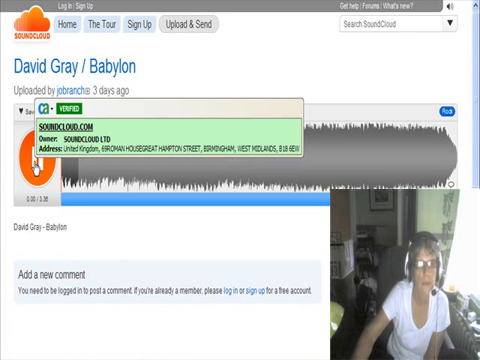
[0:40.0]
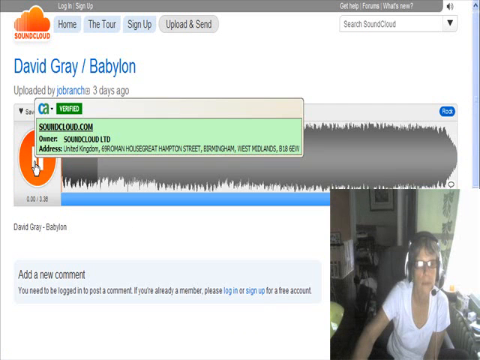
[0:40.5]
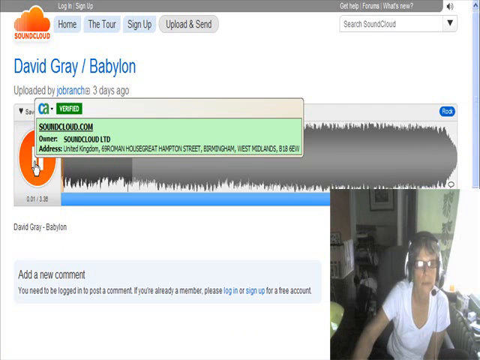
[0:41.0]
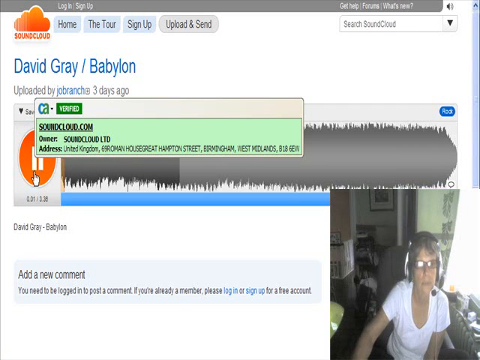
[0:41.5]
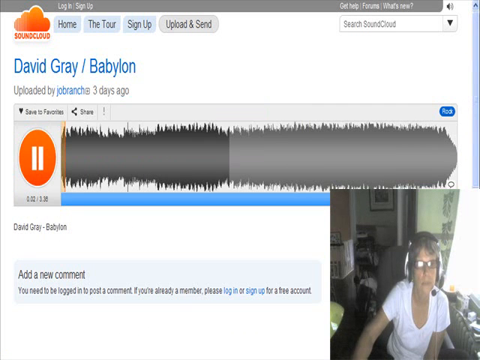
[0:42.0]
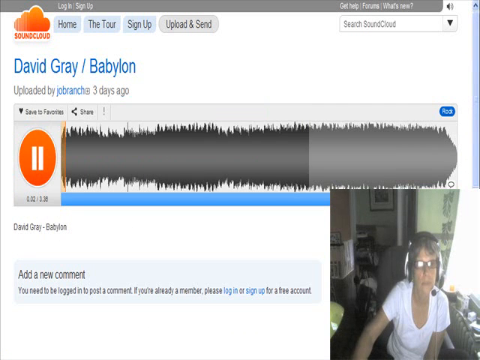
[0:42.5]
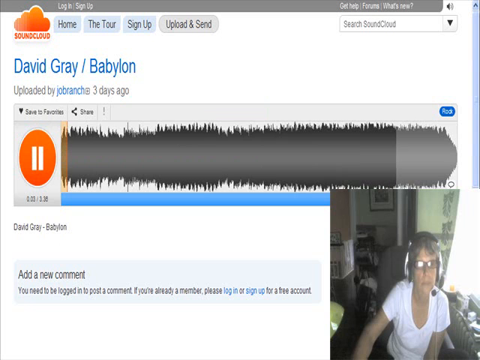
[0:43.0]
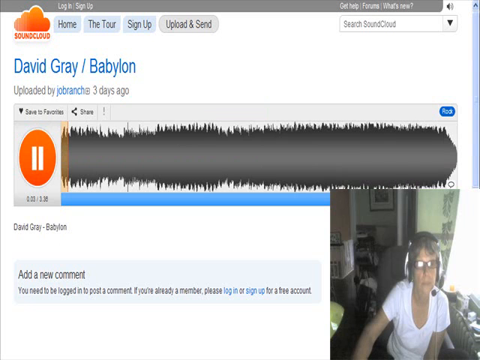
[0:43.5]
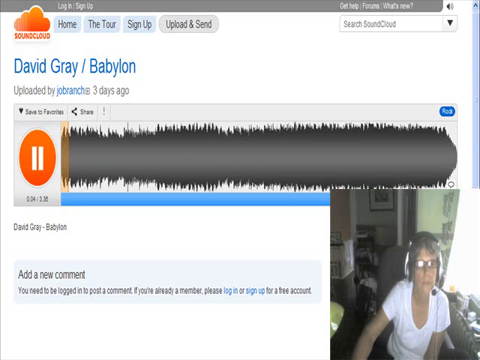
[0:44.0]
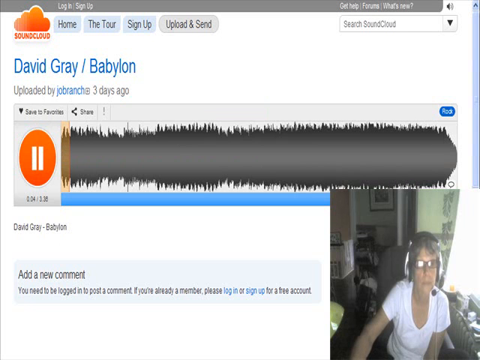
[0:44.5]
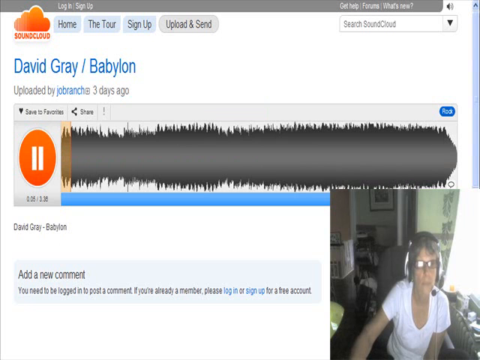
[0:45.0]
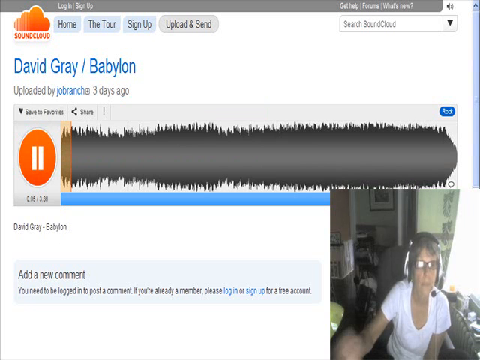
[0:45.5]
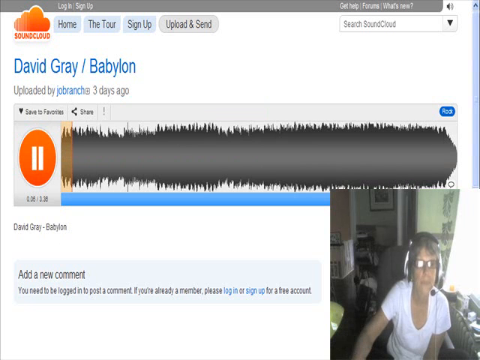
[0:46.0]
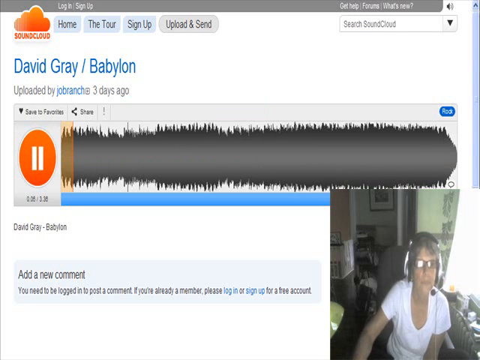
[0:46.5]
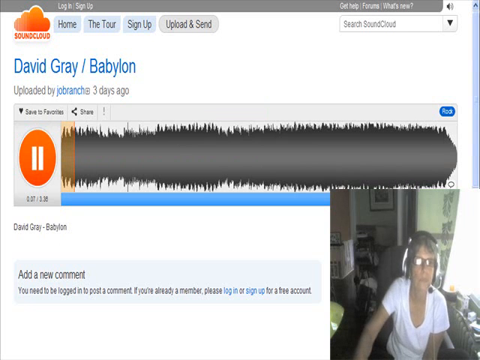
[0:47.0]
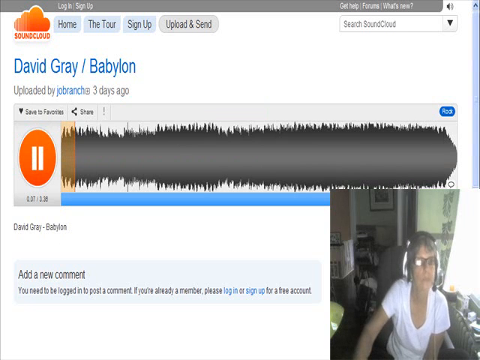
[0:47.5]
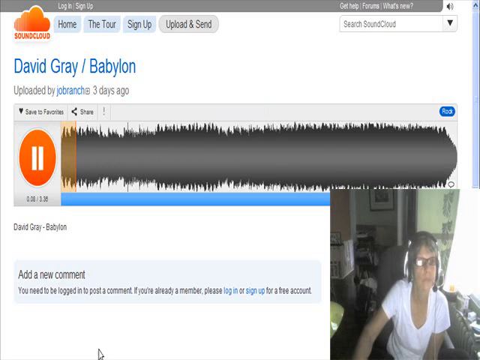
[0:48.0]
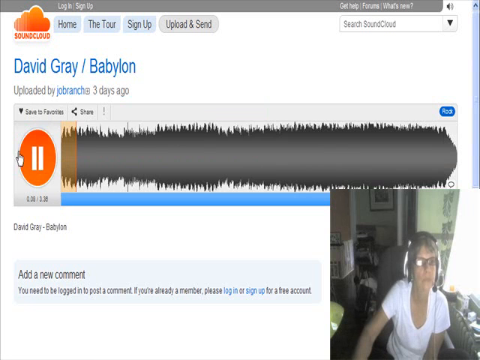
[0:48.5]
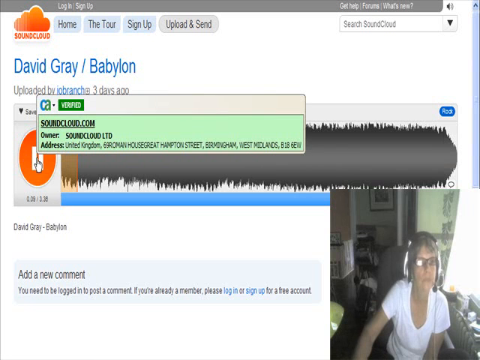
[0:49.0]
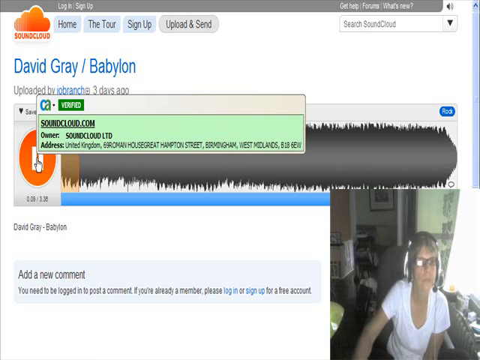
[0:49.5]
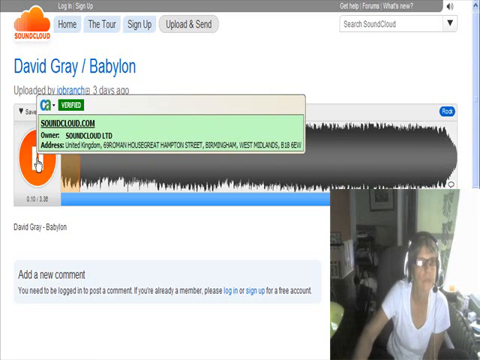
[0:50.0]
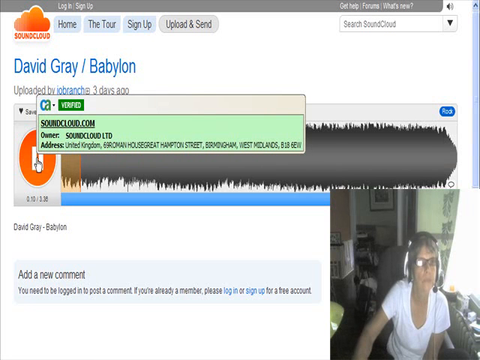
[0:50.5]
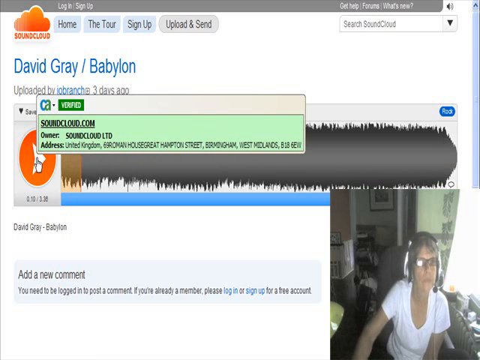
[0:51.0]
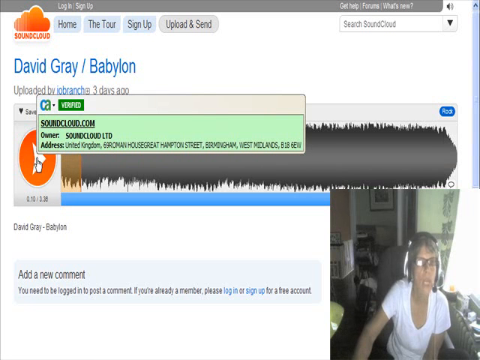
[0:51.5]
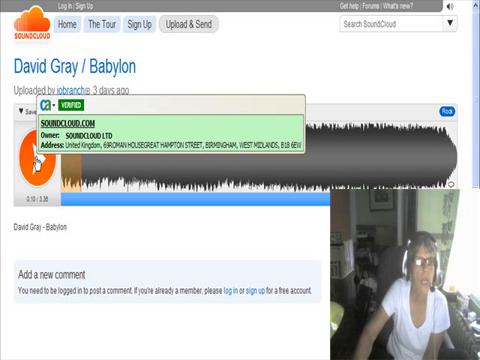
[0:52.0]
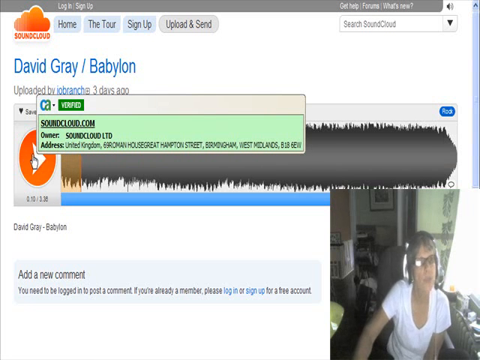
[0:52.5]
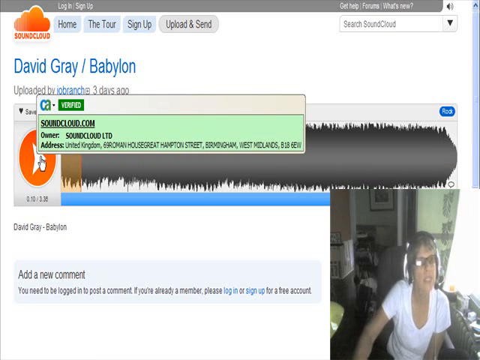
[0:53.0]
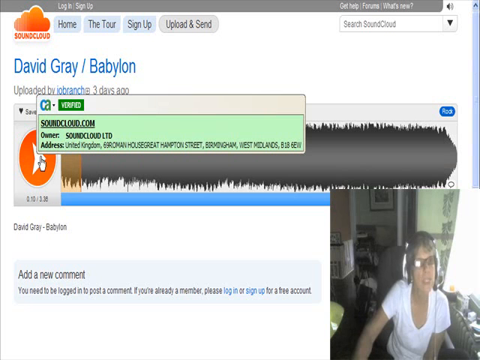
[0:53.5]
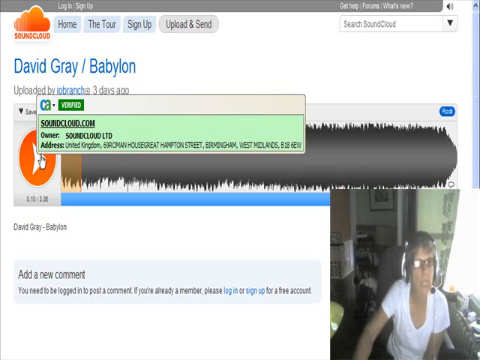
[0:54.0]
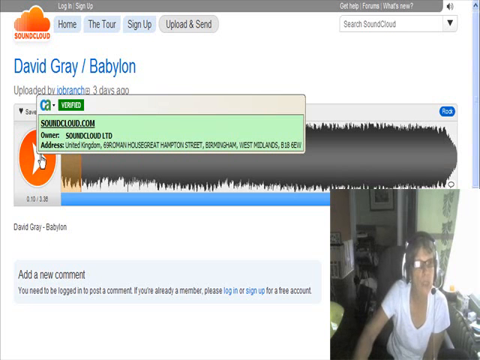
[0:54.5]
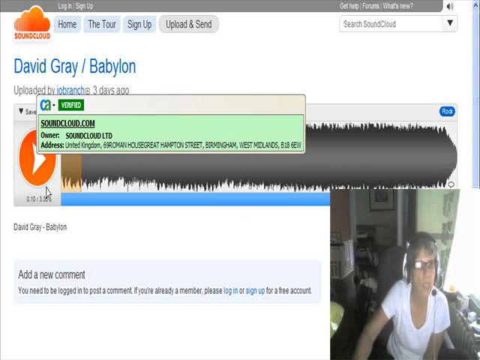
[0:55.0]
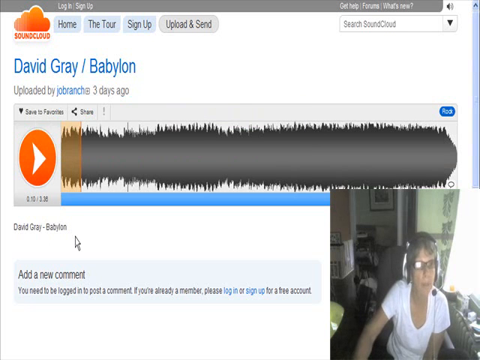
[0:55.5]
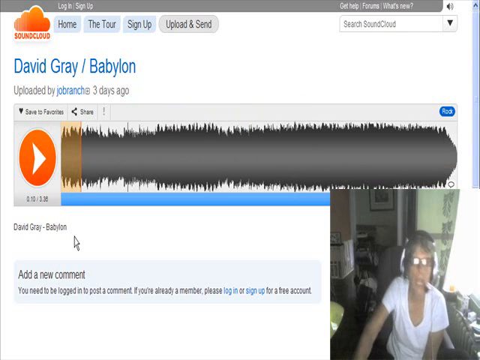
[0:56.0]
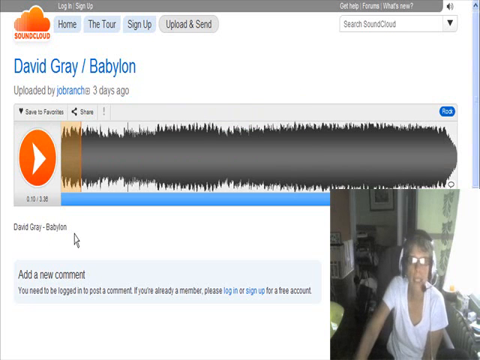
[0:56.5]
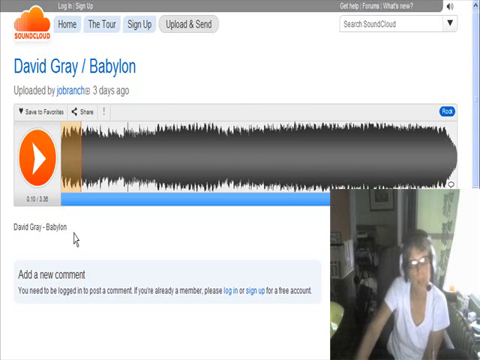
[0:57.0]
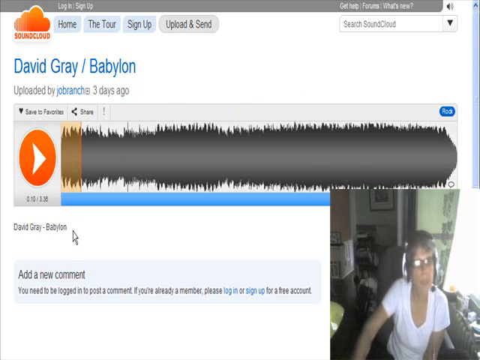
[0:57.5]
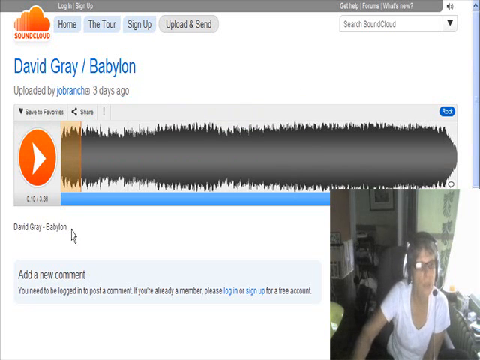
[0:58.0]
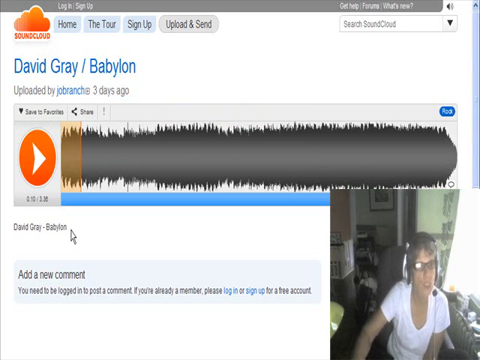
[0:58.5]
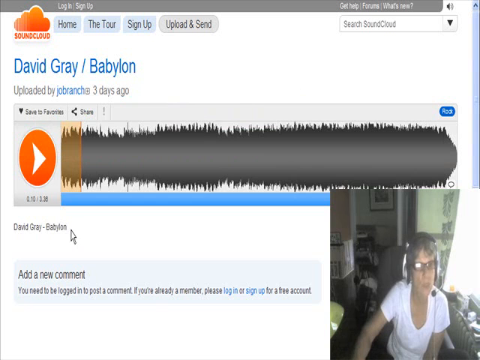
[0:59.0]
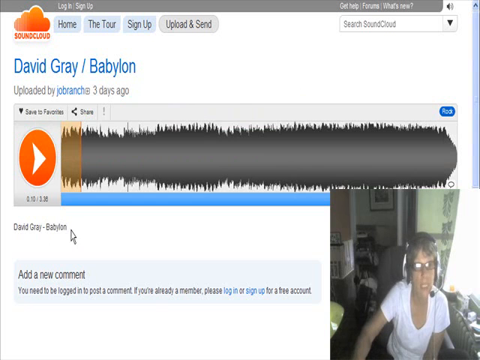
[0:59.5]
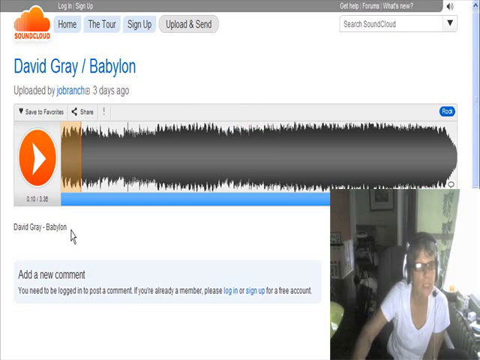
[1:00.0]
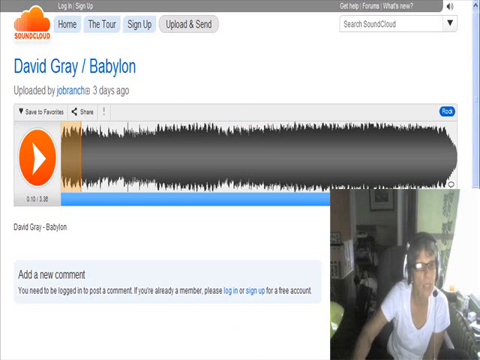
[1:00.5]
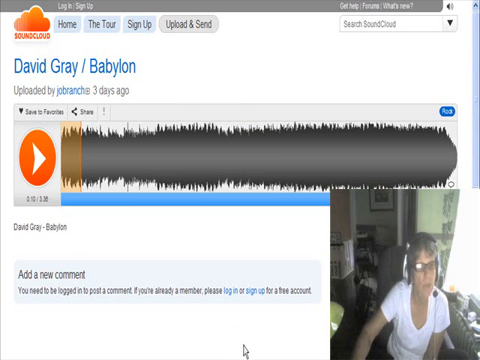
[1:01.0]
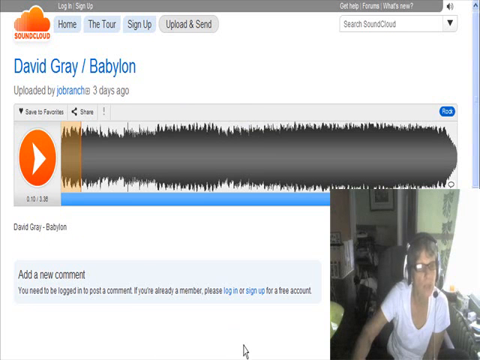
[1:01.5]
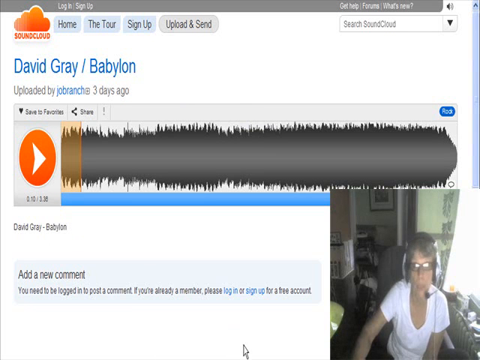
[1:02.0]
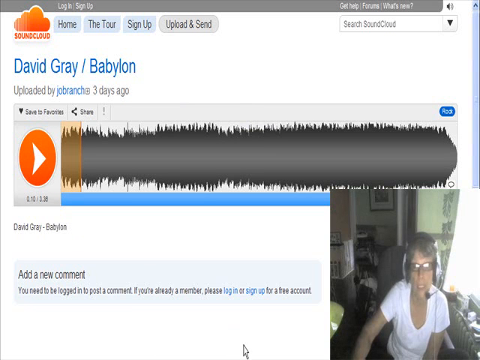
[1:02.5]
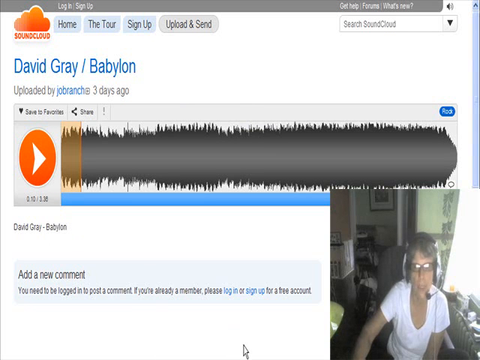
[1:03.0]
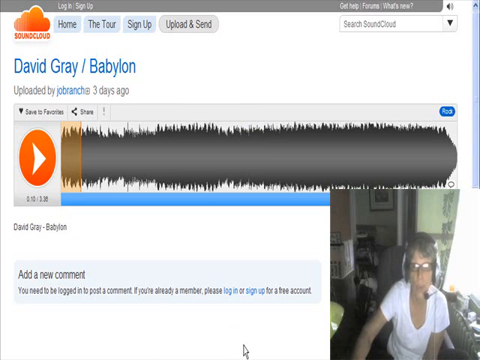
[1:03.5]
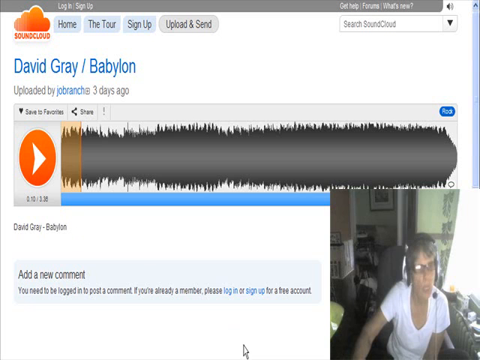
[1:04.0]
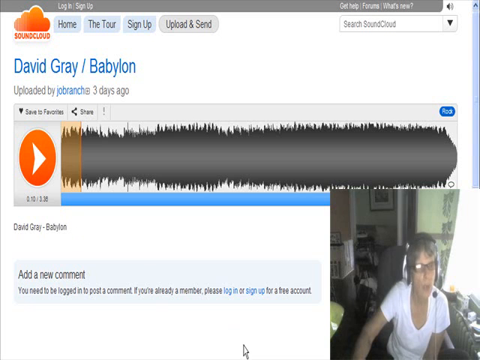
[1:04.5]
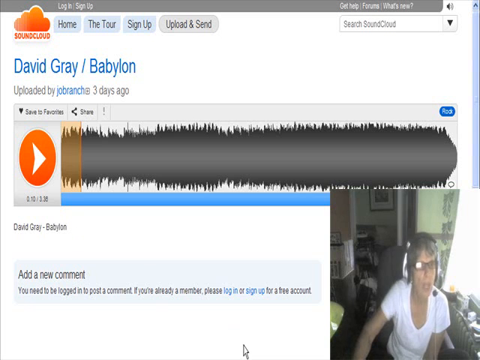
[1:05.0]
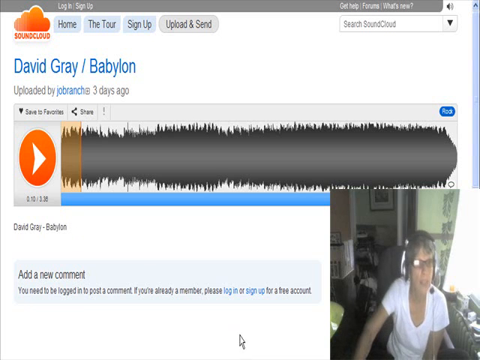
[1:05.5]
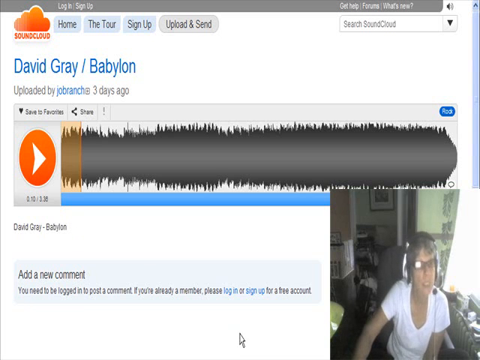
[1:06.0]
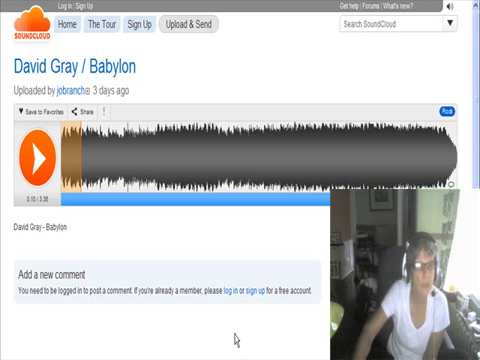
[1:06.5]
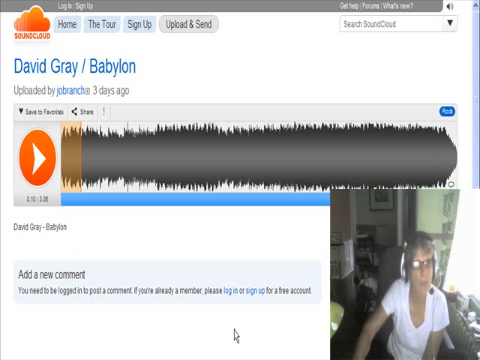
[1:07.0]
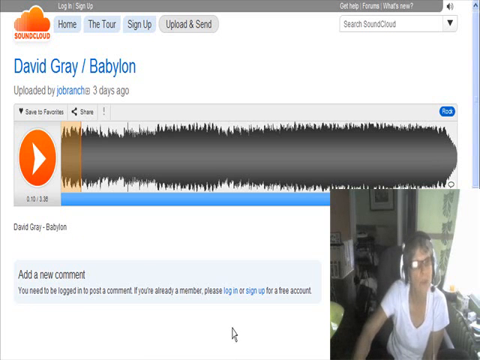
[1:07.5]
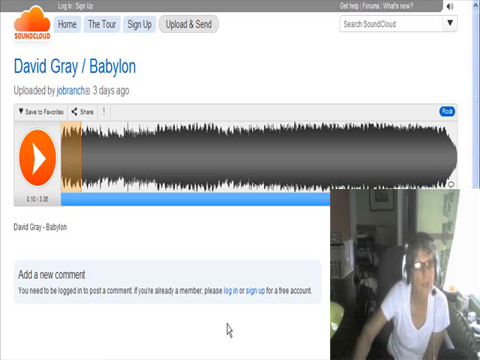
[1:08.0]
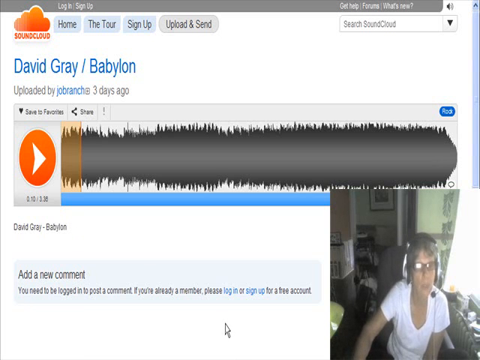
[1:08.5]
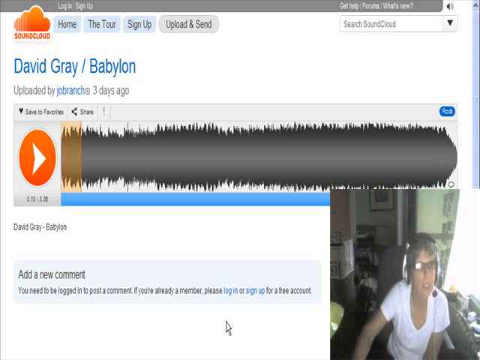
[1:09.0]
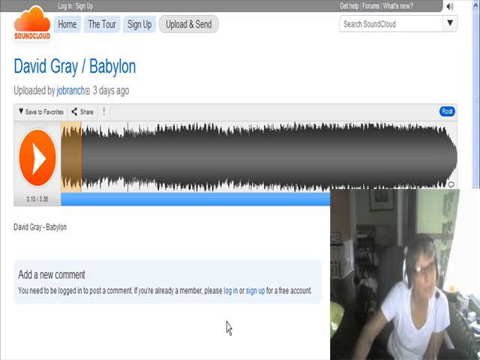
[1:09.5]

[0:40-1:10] The green opaque box apparently contains "SoundCloud" in black lettering. Behind it, the screen shows "David Gray / Babylon" in blue lettering on a white background. The sound bar is gray, and it turns darker gray as the sound is played or loads. As it plays, a somewhat semi-transparent orange bar moves across it, seemingly indicating the position in the recording. The woman moves her head slightly from left to right and back to the front, and nods her head slightly down toward the left as she speaks. She moves her head back and forth several times, slightly, looking as if she is reading information from something. At one point she moves her mouse with her right hand; her hand comes off the mouse and is briefly visible palm up, but most of the time her hand cannot be seen because the frame cuts off at the wrist.